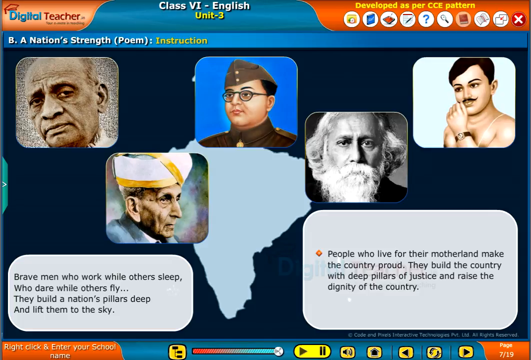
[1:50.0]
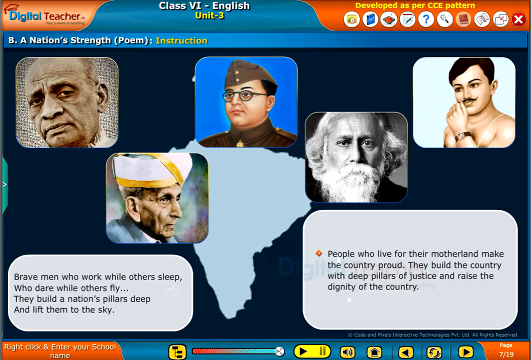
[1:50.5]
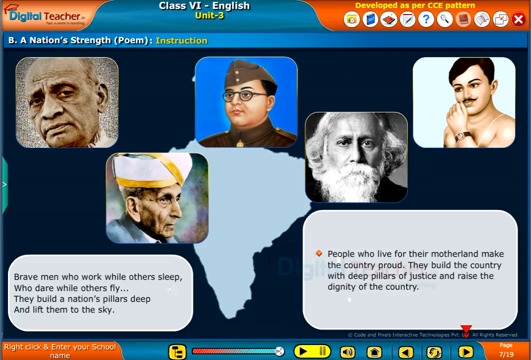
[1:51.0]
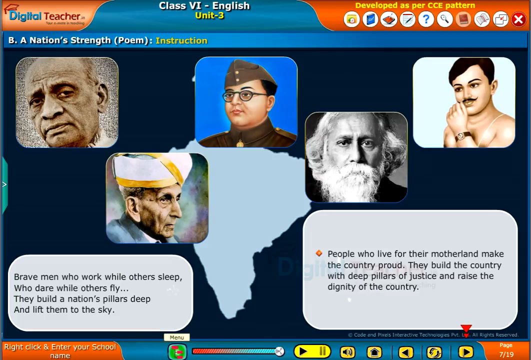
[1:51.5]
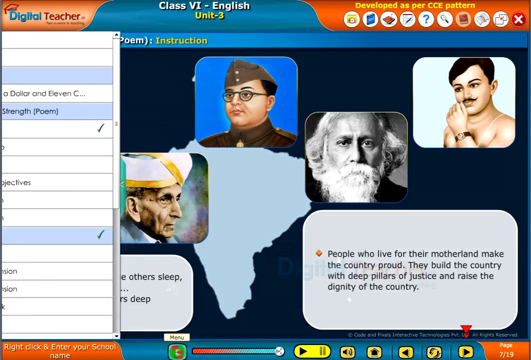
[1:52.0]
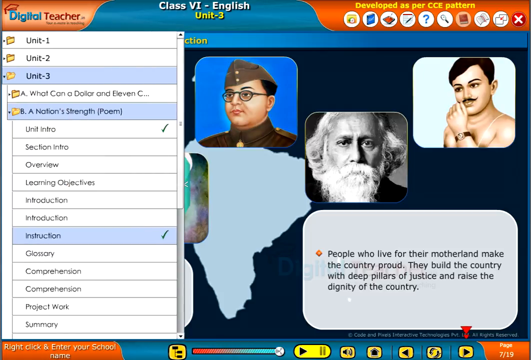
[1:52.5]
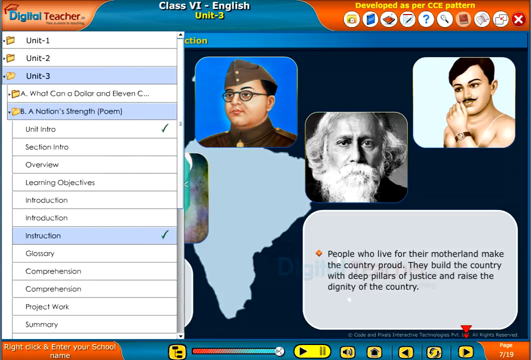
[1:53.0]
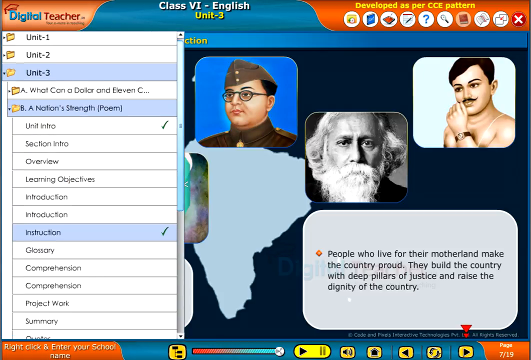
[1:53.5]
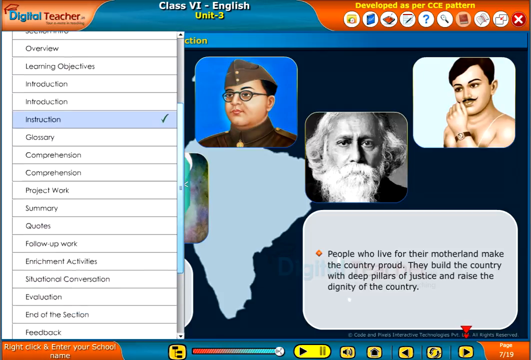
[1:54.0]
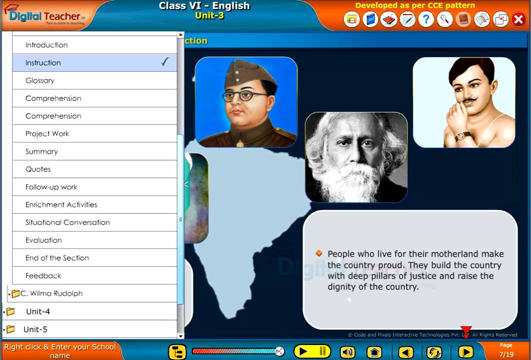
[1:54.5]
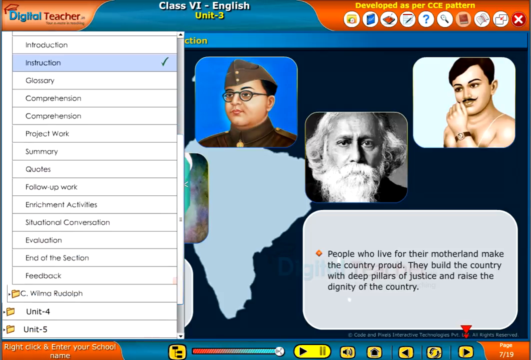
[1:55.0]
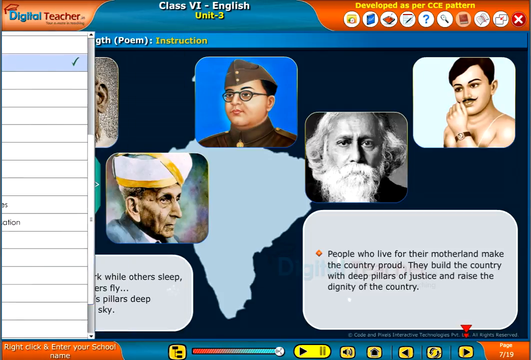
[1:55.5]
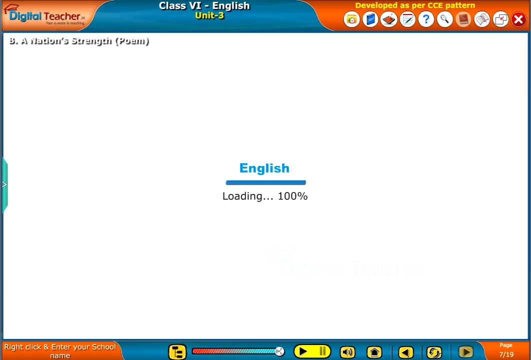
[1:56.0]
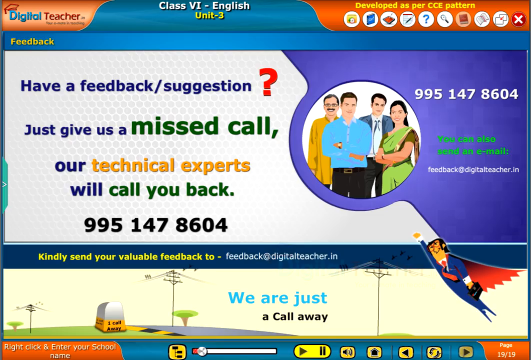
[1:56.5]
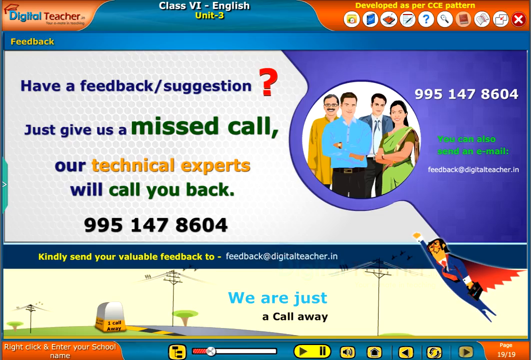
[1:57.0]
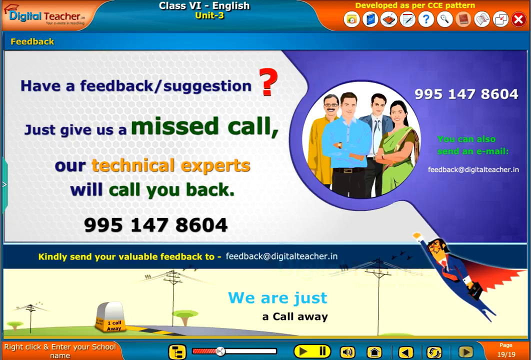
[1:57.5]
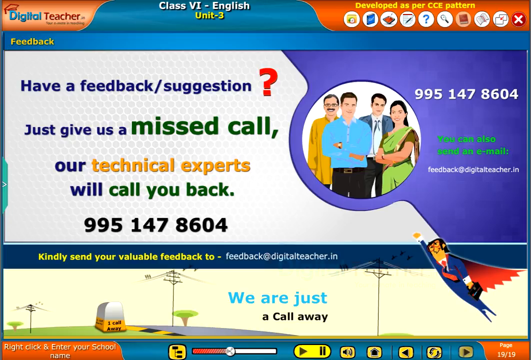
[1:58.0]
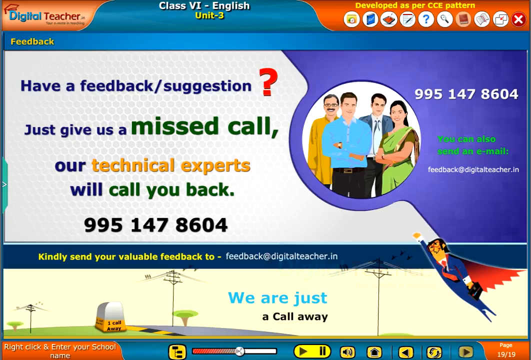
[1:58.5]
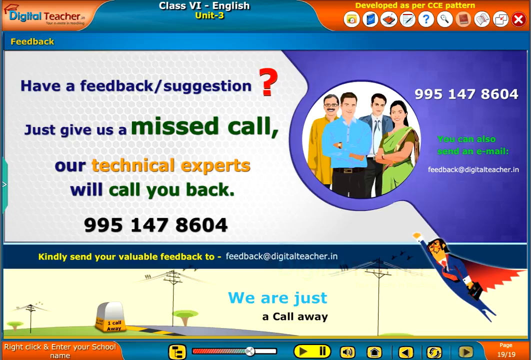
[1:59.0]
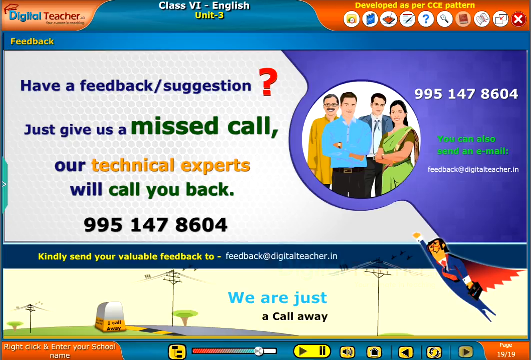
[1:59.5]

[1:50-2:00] A desktop application screen for an English class has a horizontal frame in green and red along the top. On the red part at the left it says "Digital Teacher"; in the middle, on the green part, it says "Class 6, English Unit 3"; on the right are several menu icons. The main screen has a black background with an outline of the map of India in pale blue, with no state lines or text. Across the screen are five images of different men who look like historical figures of India. At the lower left and lower right is some text on rectangular outlines with rounded corners. A menu frame then slides up on the left side of the screen, and the feedback option is selected. The screen transitions to a very colorful feedback screen that includes contact information such as a phone number and an email.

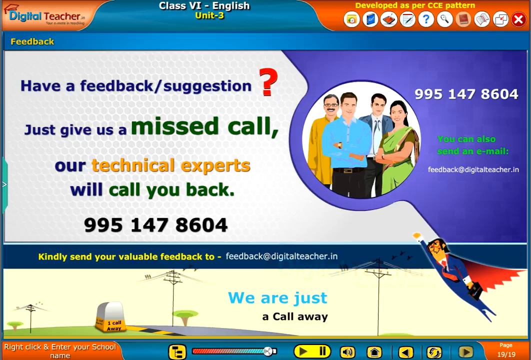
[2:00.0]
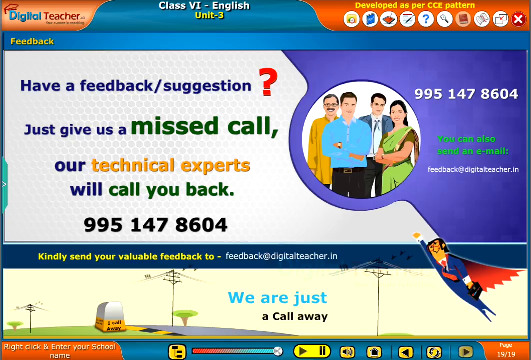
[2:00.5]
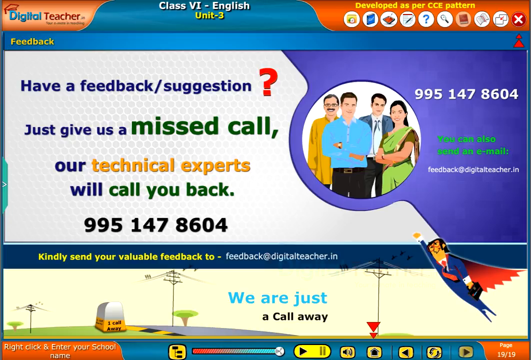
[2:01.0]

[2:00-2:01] A feedback screen of a desktop application has a horizontal bar across the top in red and green. On the left side of the bar is the name of the app, "Digital Teacher". In the middle, on the green part, white text says "Class VI, English Unit 3". At the upper right, against a red background, are various menu icons. Text on the screen says "have a feedback suggestion. Give us a missed call. Our technical experts will call you back. 995-147-8604." On the right side of the screen is an image of four people standing side by side, with the woman on the left, in a circular frame with a white background.